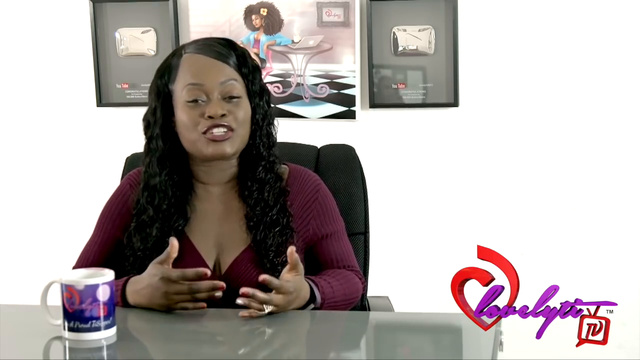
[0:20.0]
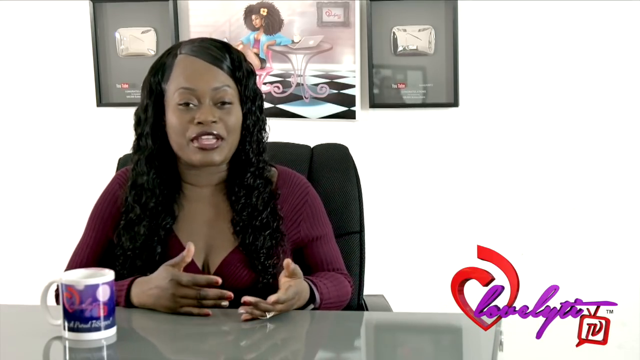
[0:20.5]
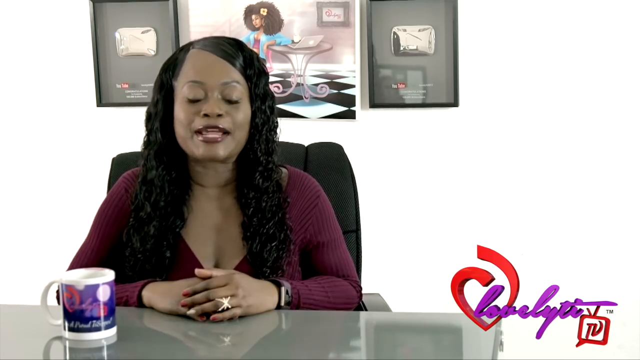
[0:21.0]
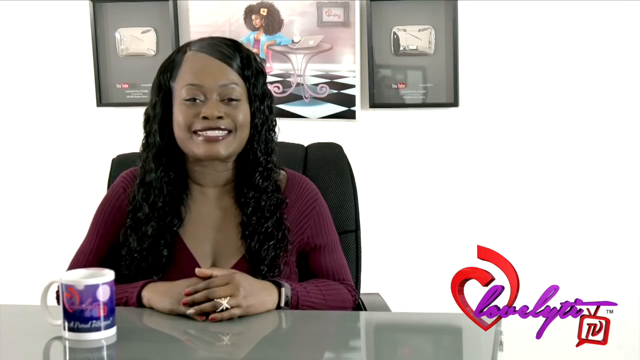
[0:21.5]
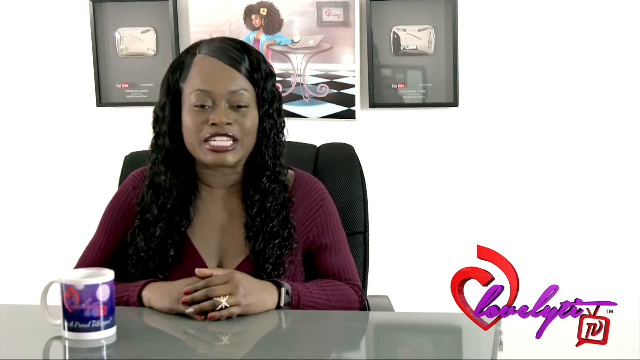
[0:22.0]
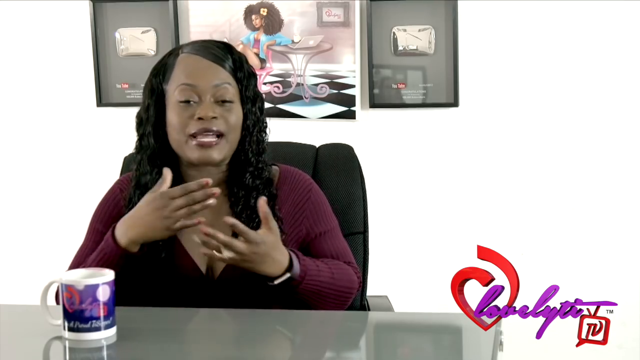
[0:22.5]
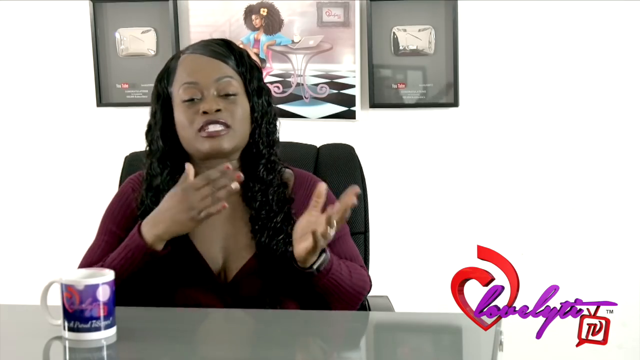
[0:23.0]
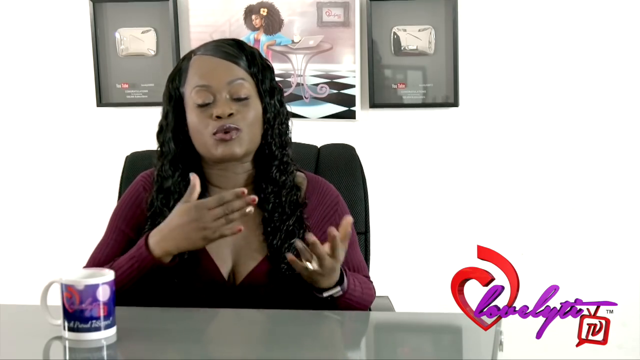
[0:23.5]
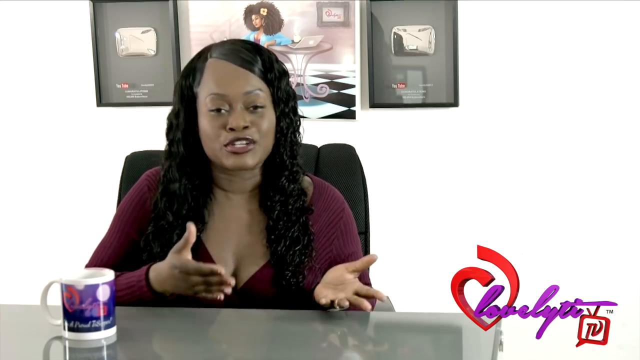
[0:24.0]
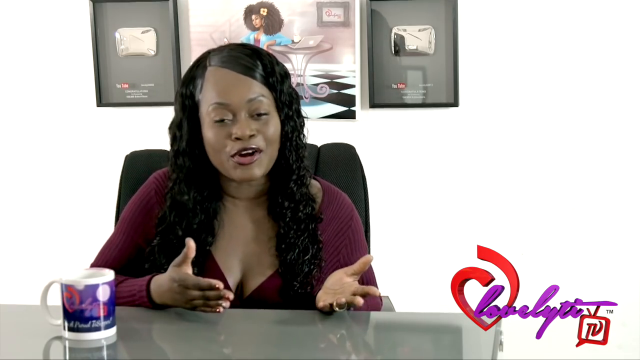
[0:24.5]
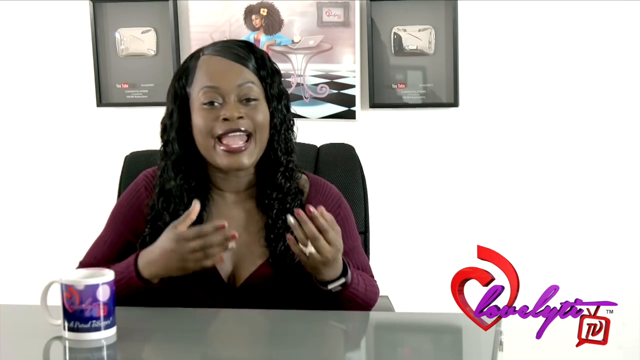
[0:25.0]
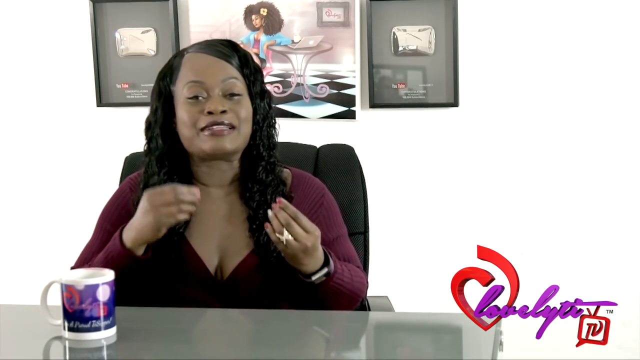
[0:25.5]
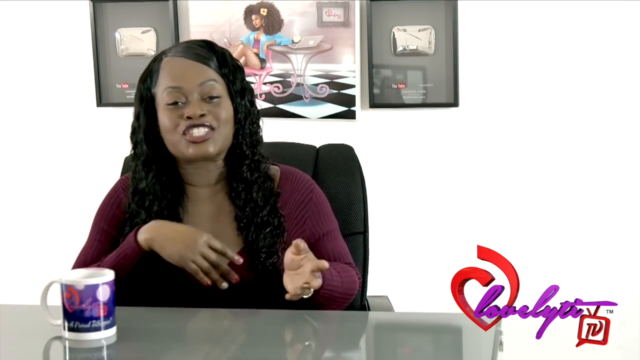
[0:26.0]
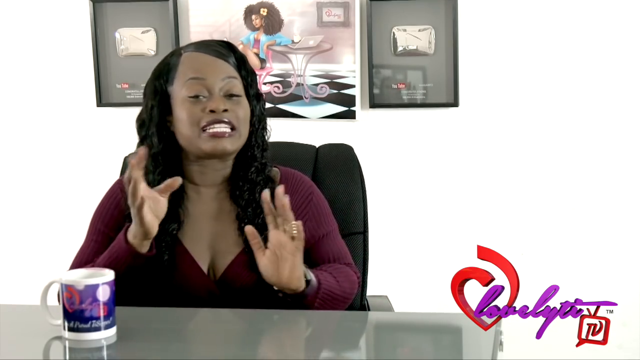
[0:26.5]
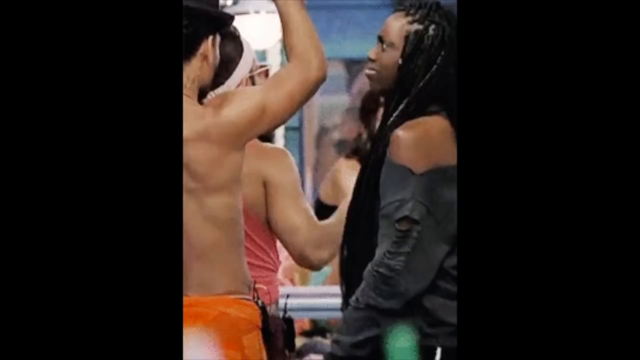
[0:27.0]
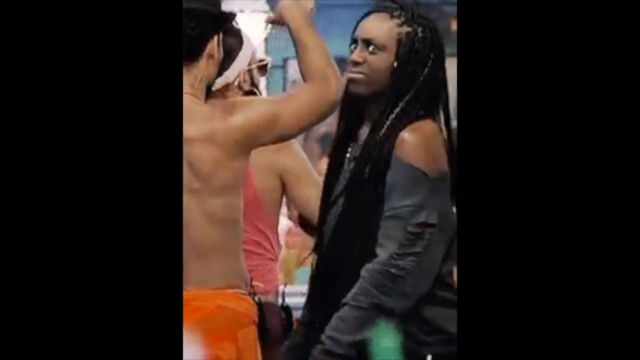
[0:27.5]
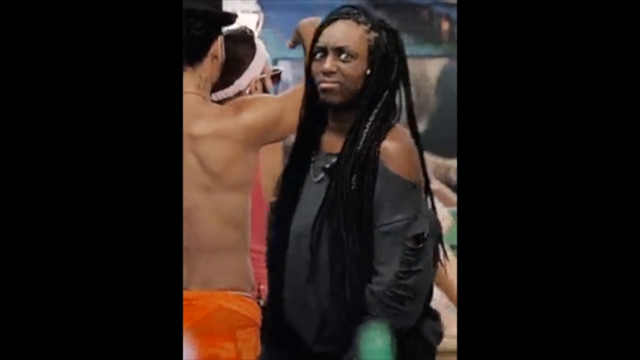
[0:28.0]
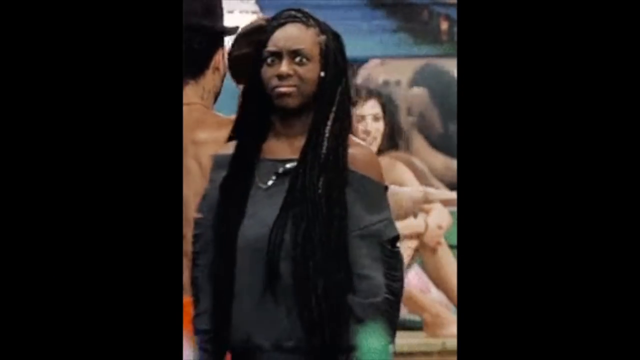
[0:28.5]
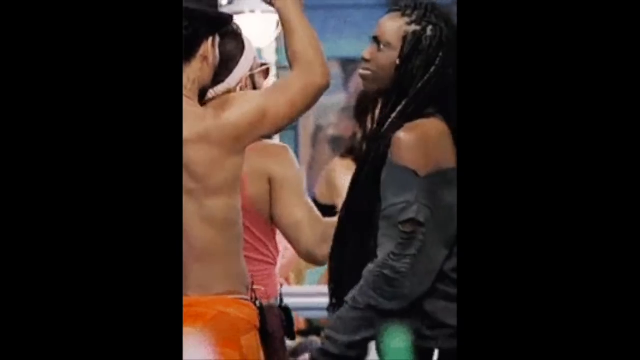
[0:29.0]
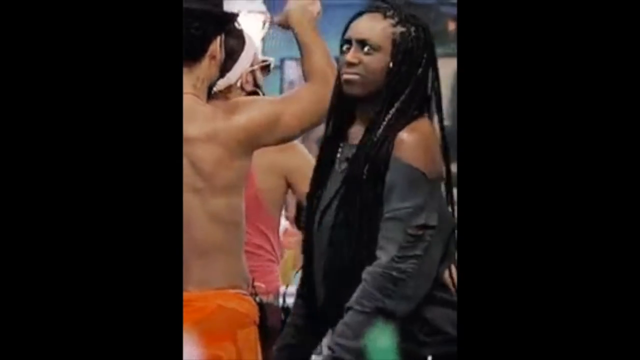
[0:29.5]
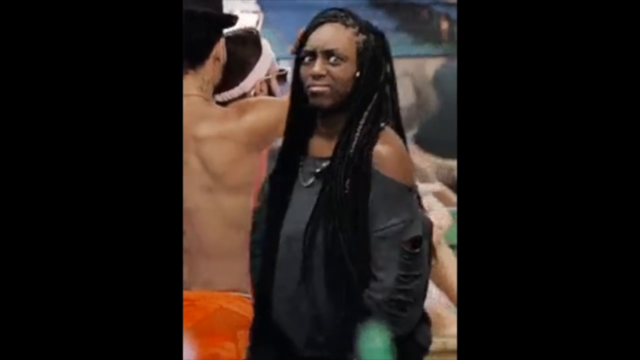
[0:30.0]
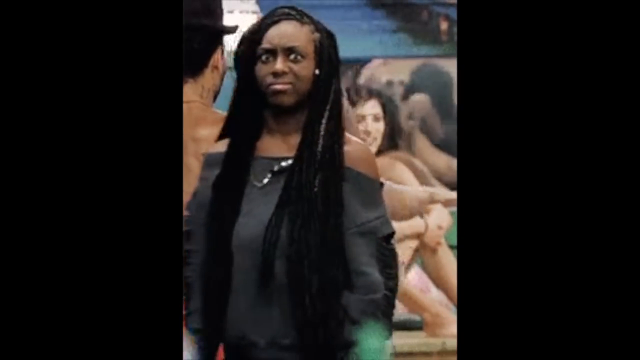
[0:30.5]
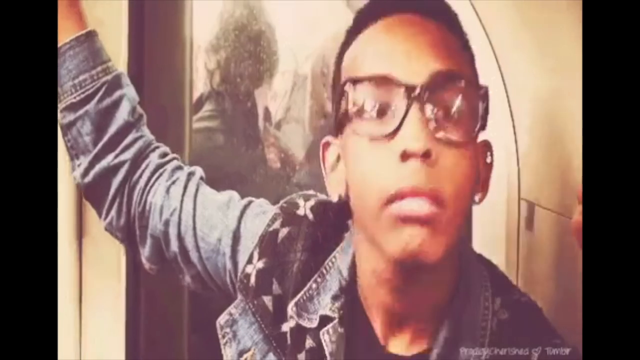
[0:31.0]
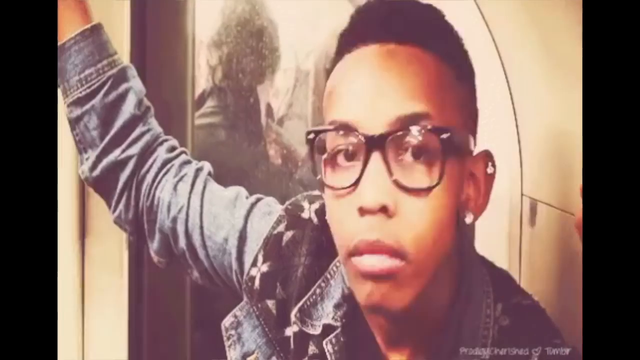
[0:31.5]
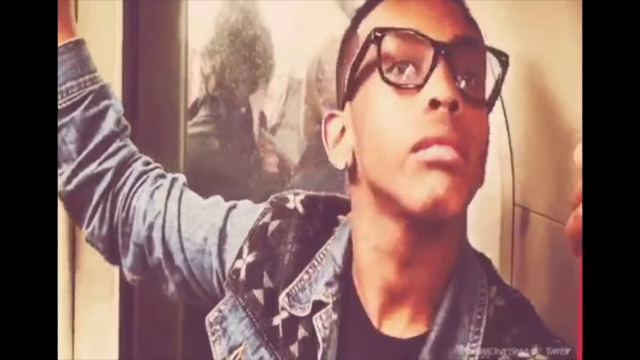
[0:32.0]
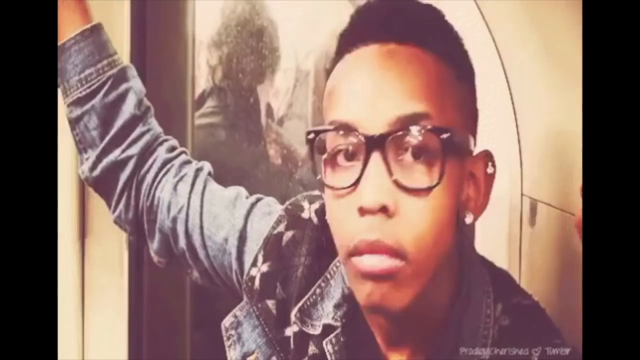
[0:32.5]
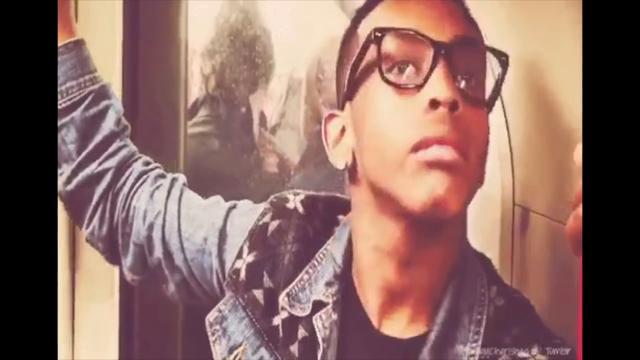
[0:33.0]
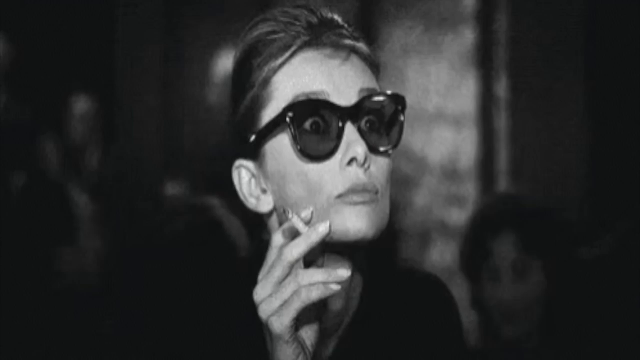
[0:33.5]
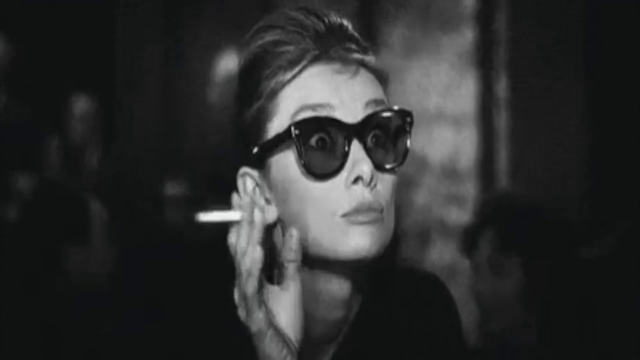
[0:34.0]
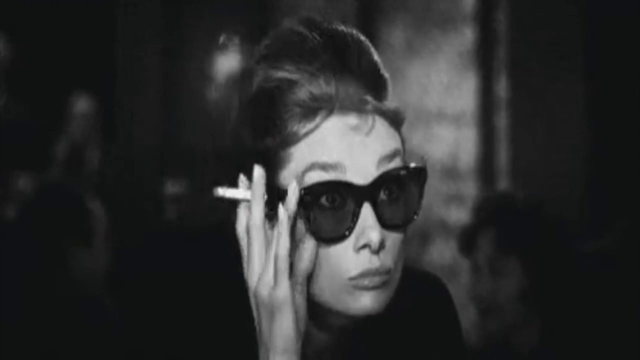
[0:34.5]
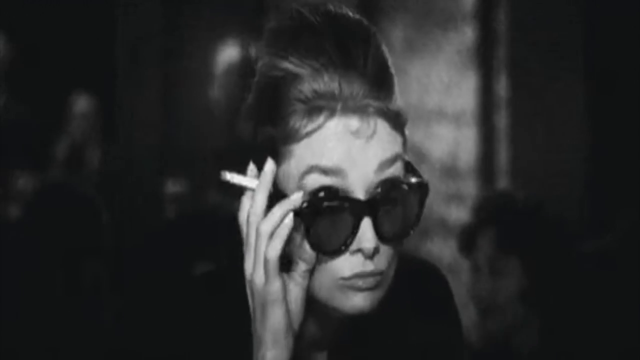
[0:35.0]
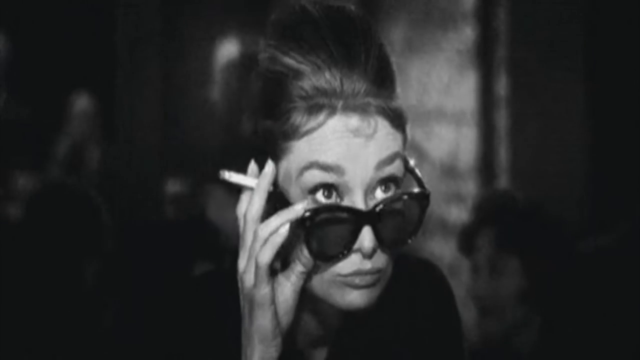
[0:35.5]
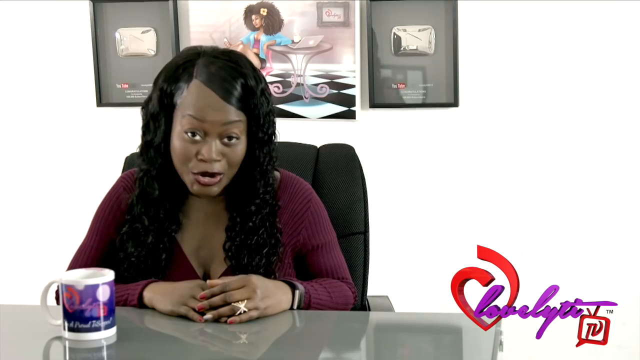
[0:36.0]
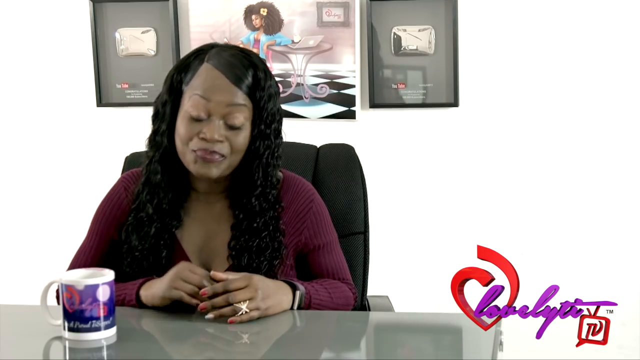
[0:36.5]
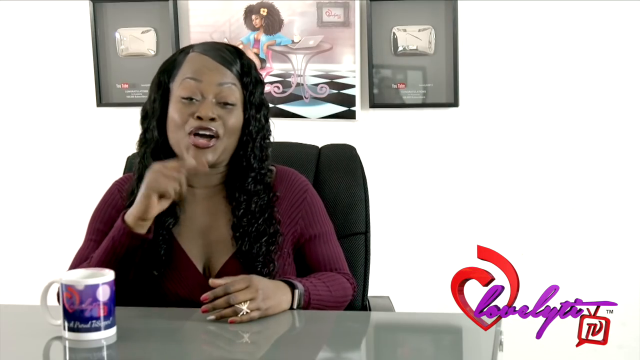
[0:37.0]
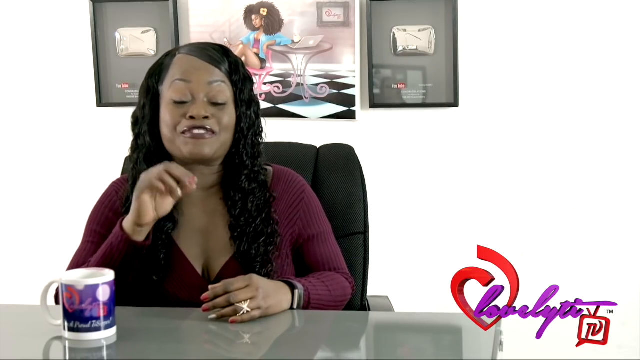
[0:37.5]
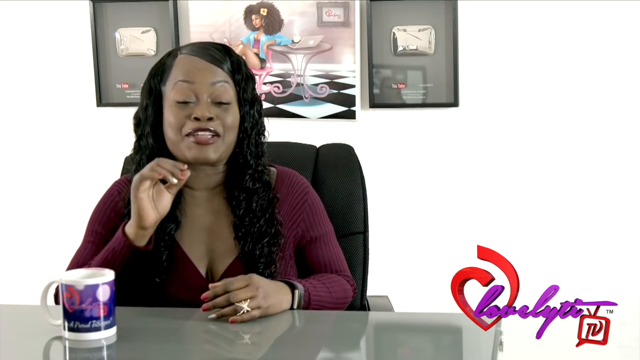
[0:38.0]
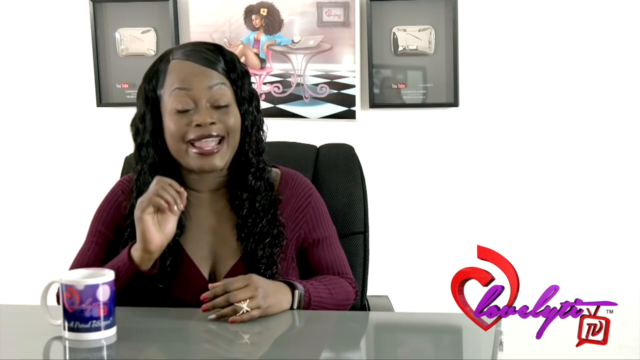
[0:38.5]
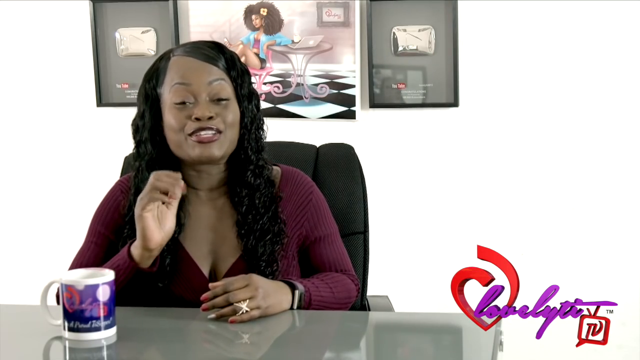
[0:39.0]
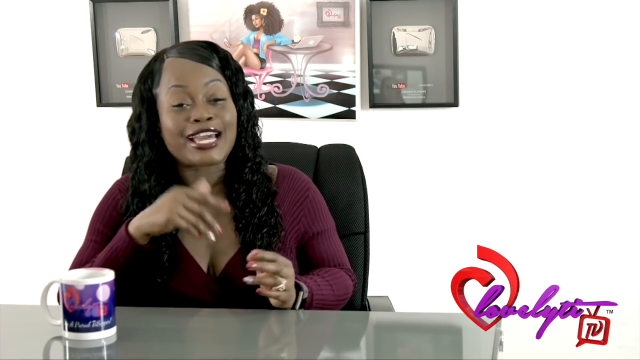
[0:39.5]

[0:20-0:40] The background behind the creator is not only stark white: a picture hangs on the wall, with what looks like a plaque hanging on either side of it. The YouTube creator still sits at her desk in a black office chair. She wears a burgundy V-neck top cut very deep and has long black wavy hair. Her arms are bent at the elbow with her forearms toward the desk in front of her, palms facing up but turned slightly so they partly face each other, and she moves her hands up and down in this position as she speaks. A coffee mug is to her right. Purple writing reading "Lovely T" appears in the lower right of the frame along with a ribbon that forms a heart. The scene then changes to a woman with long black braids and a disturbed look on her face, her mouth shut. She looks at something behind her, turning toward the left side of the screen, then turns her body further until she faces the camera, showing a perplexed expression.